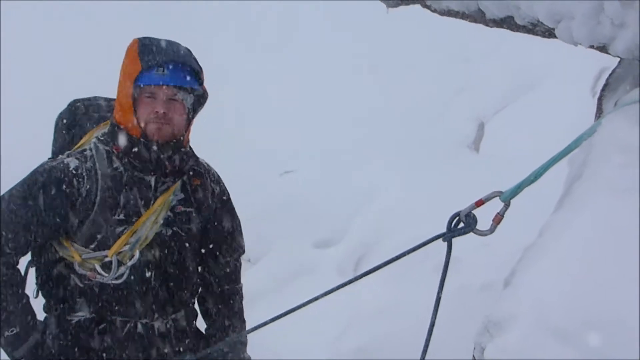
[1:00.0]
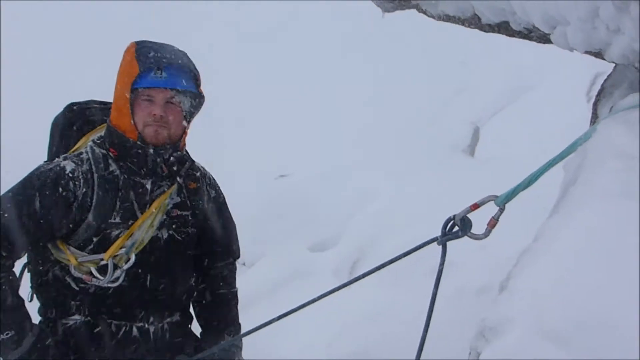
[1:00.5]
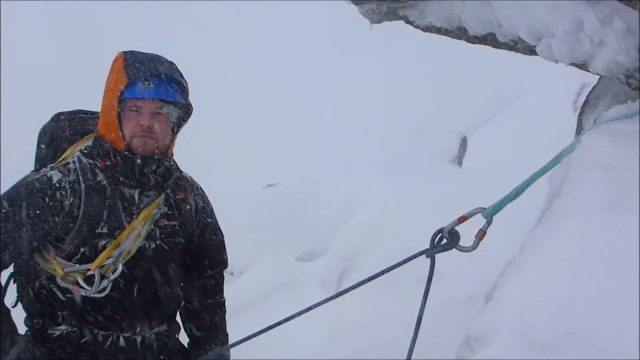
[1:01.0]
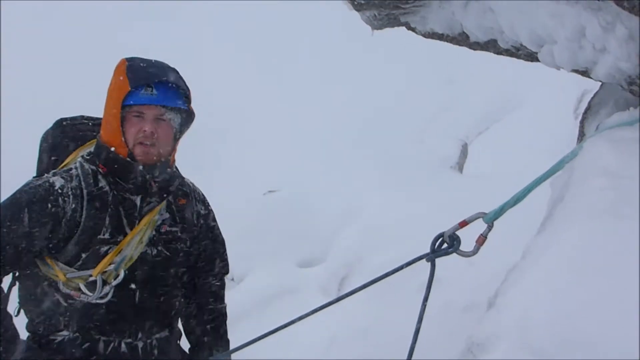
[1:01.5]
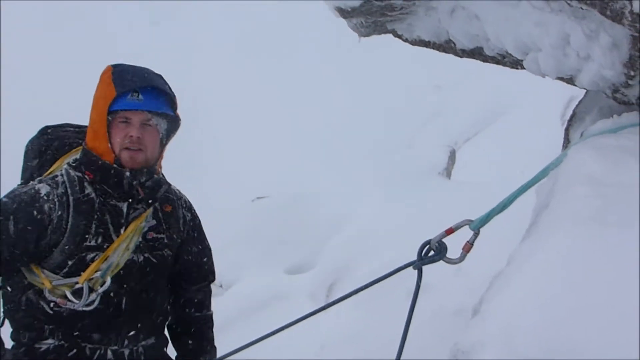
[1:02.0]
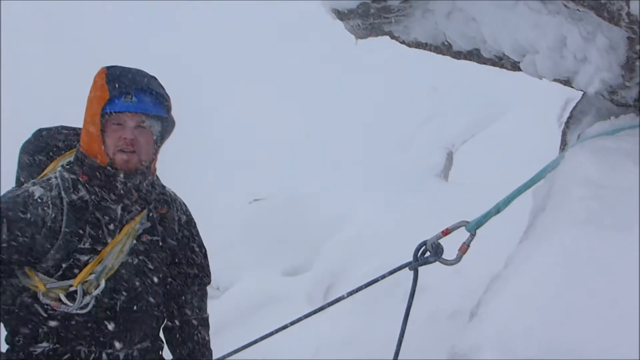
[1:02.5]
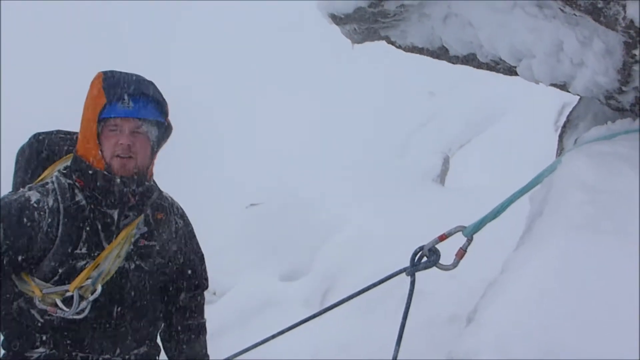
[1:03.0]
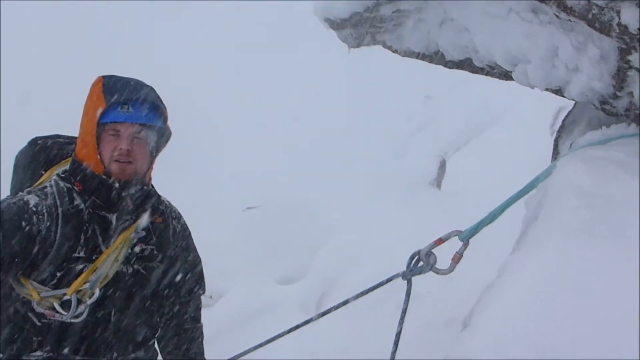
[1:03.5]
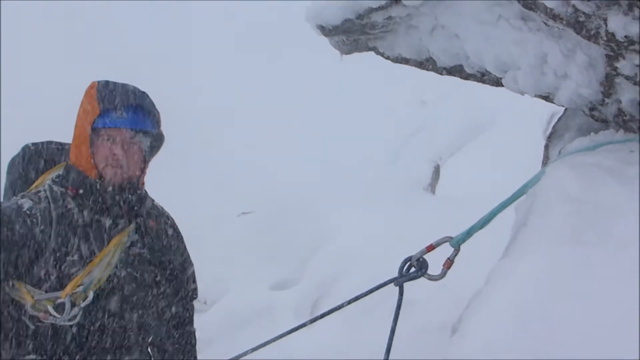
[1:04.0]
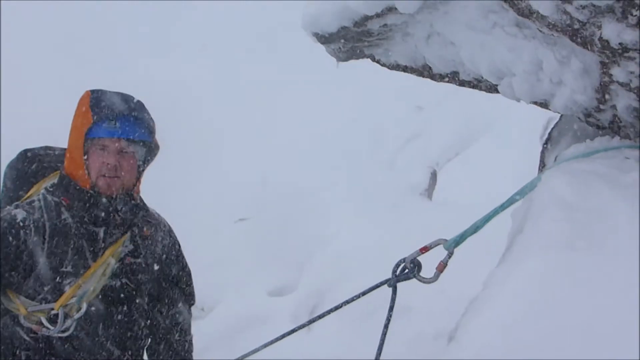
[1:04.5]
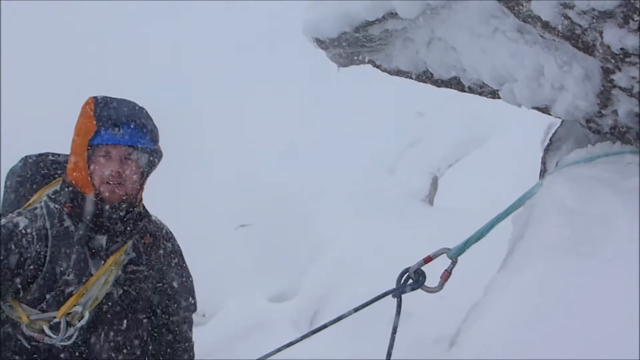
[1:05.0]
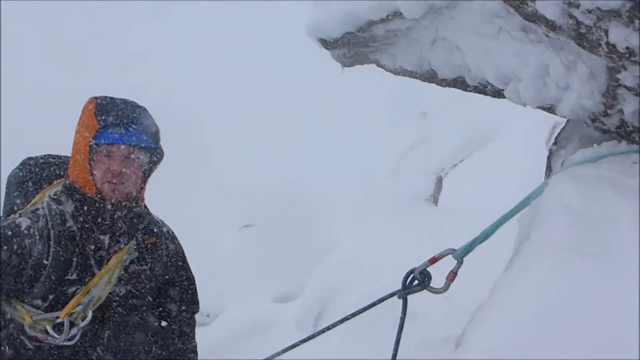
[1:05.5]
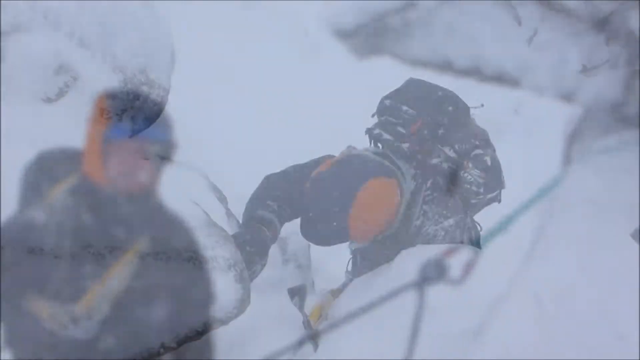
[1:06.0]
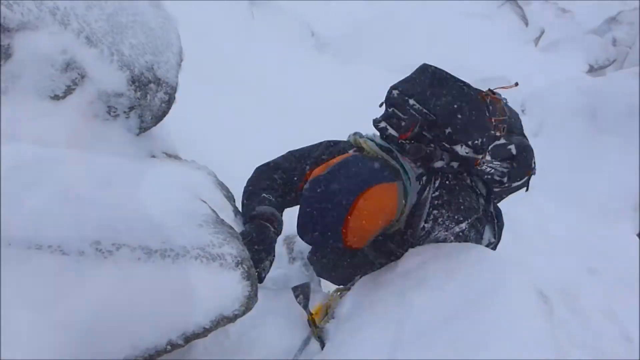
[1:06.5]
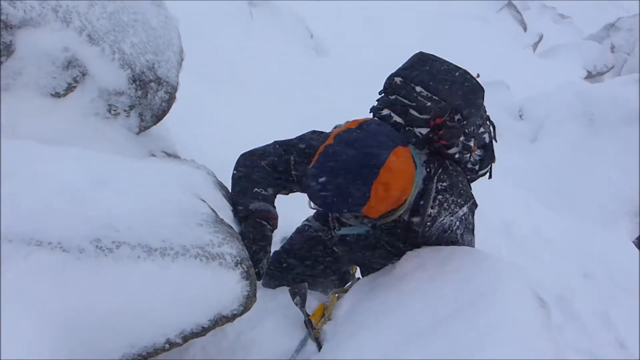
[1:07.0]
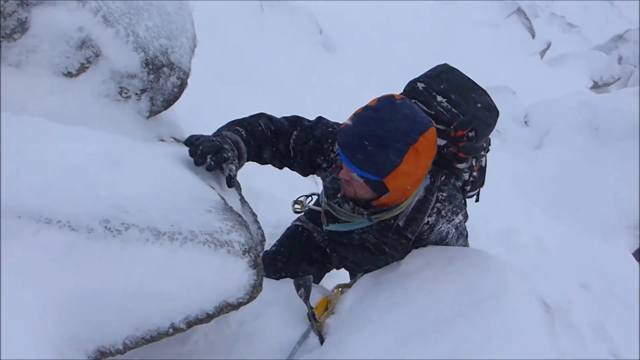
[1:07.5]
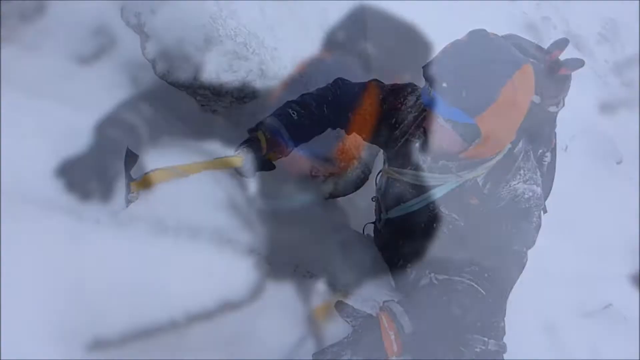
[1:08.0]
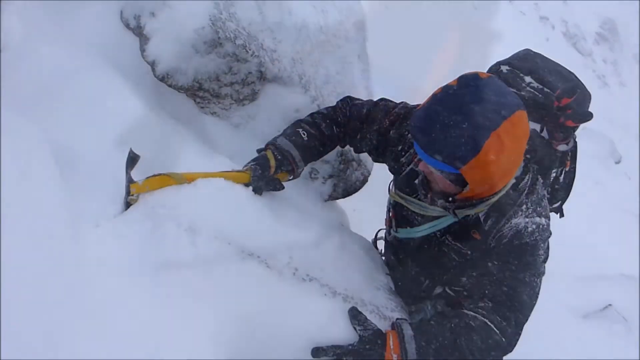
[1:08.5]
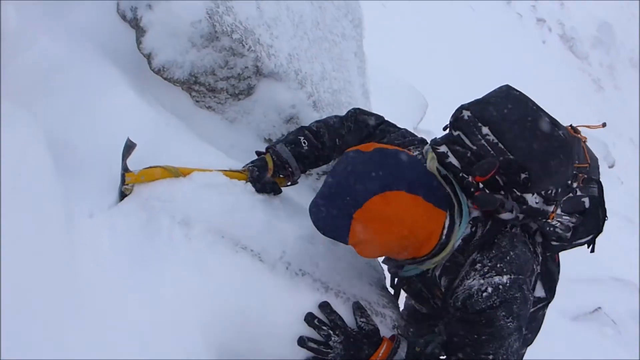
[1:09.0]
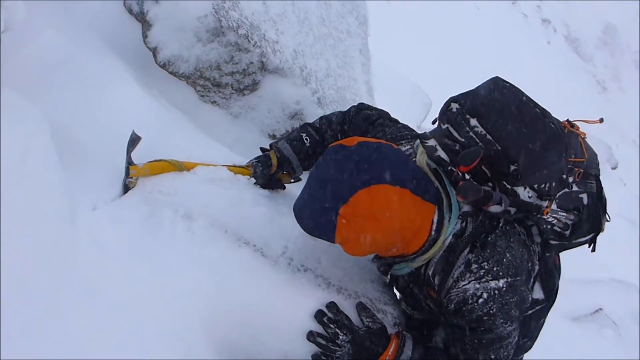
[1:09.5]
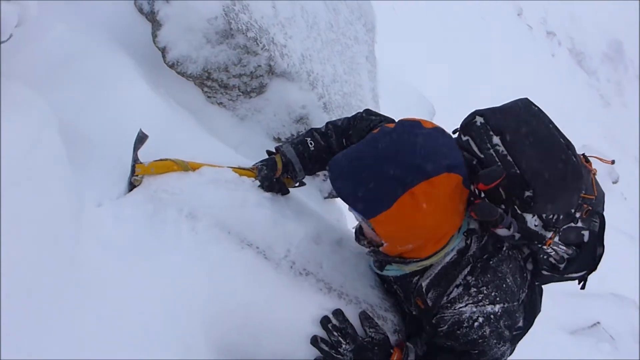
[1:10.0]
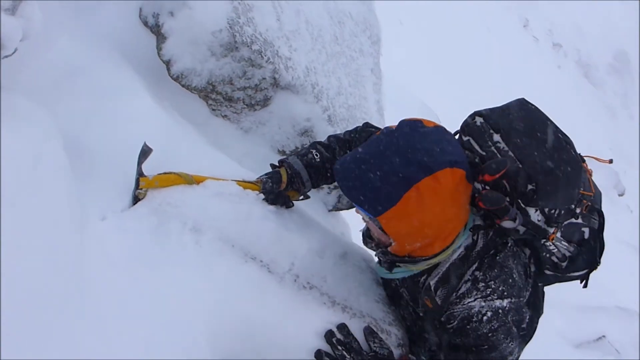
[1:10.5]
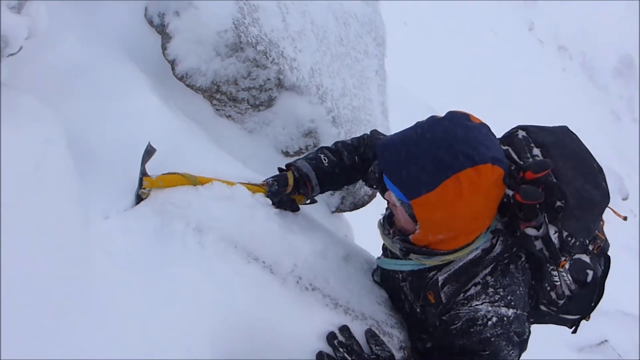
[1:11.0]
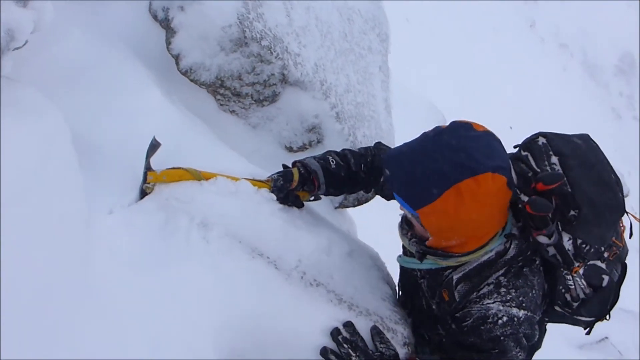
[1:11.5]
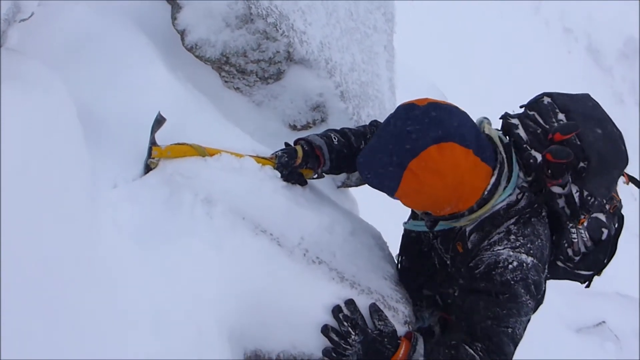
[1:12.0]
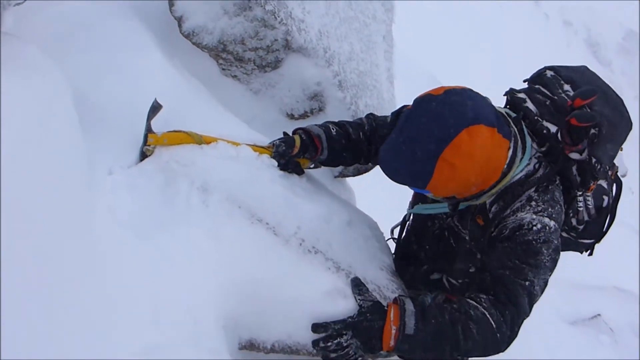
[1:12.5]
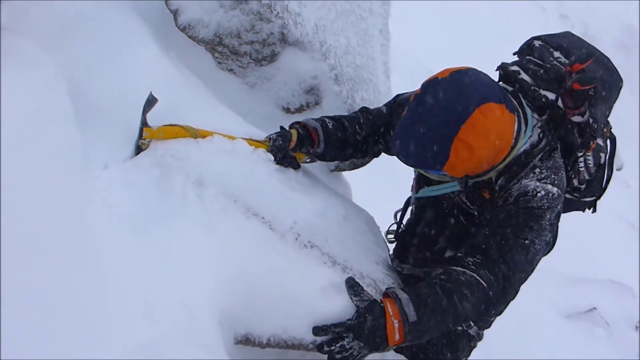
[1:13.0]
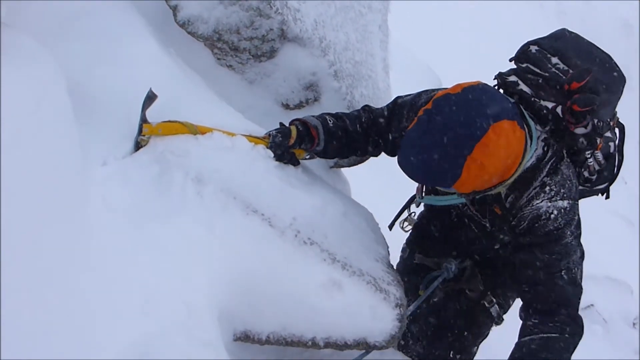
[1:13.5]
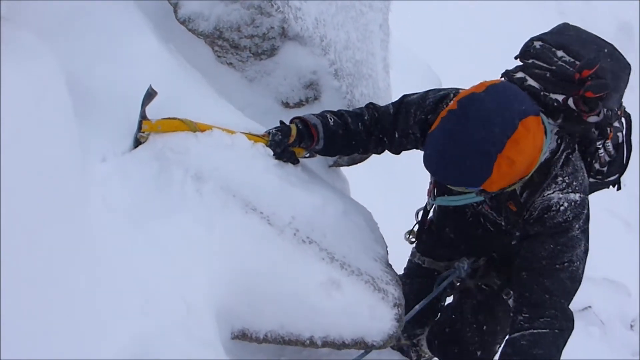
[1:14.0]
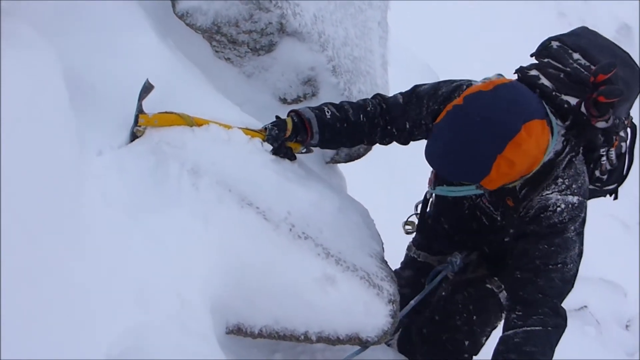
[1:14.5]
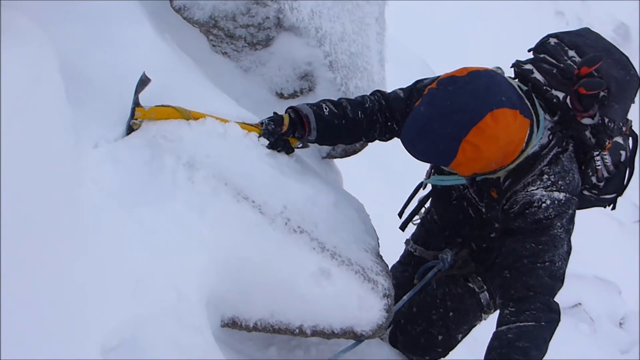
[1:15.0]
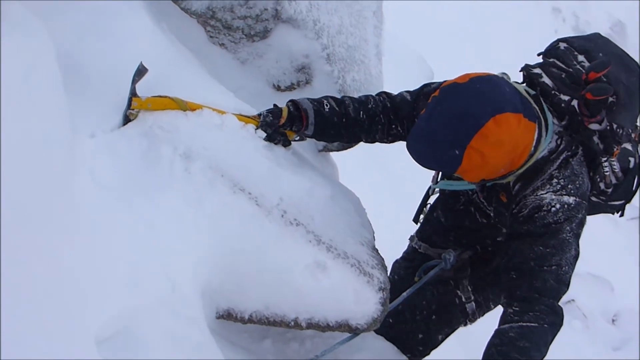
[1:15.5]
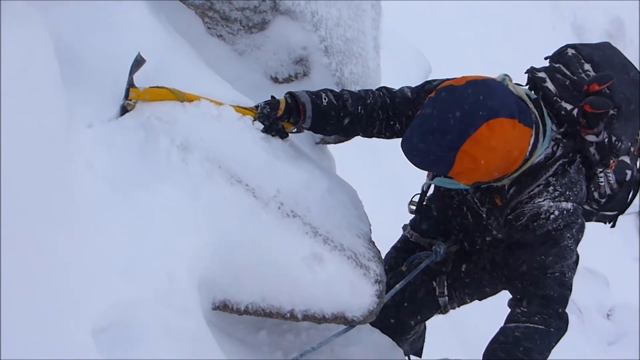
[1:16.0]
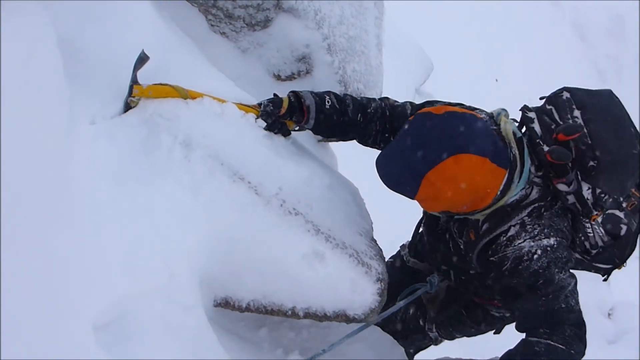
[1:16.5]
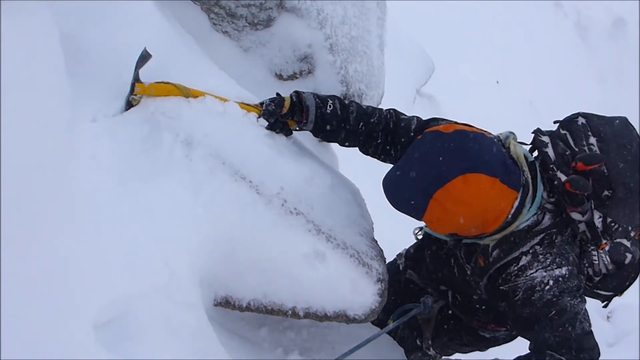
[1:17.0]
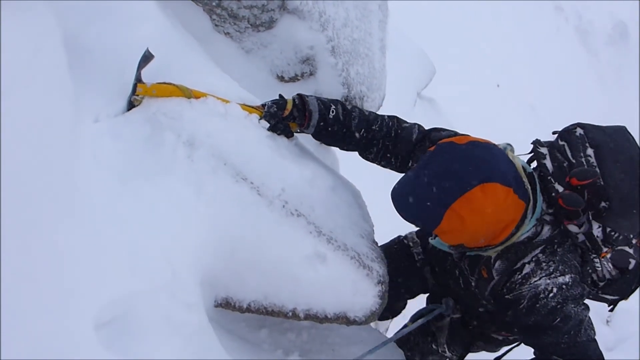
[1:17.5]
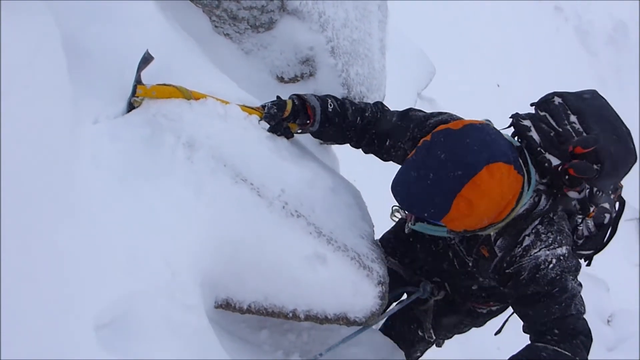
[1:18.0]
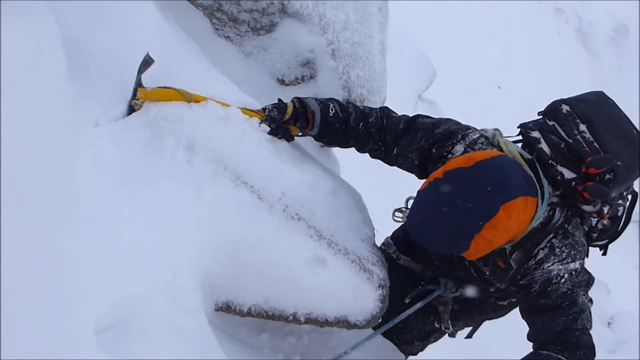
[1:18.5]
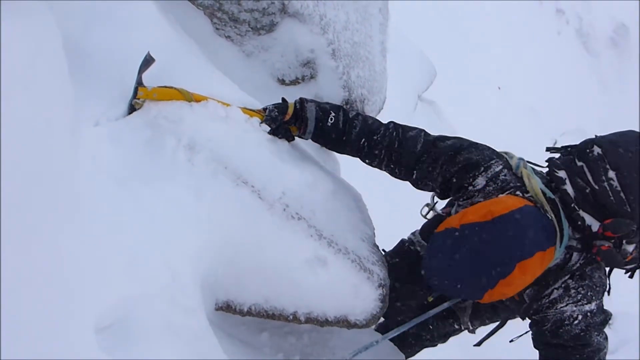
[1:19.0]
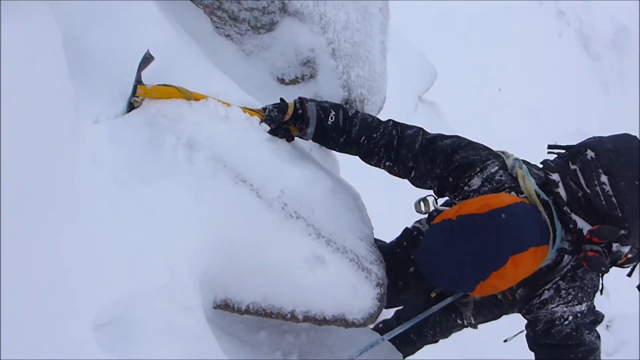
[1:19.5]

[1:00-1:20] The climber stares at the camera, standing on the left side of the screen. On the far right are boulders or rocks with a teal rope connected by some kind of metal device in the center, and a dark black rope toward the left of it. He starts speaking into the camera, with snow falling in front of him. The view changes to a different angle, looking down from high up, still somewhat zoomed in, as the climber climbs up rocks in the center of the screen, approaching the camera. He has what appears to be a yellow spike, almost like a hammer, which he jams into certain areas of the mountain to help pull himself up. He moves gingerly, holding the yellow hammer with his right arm and using his left arm to find a place on the mountain to grab to secure himself as he moves up. He jams his feet into certain spots for footing.